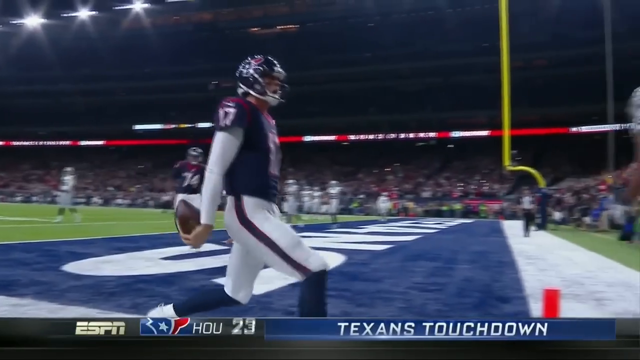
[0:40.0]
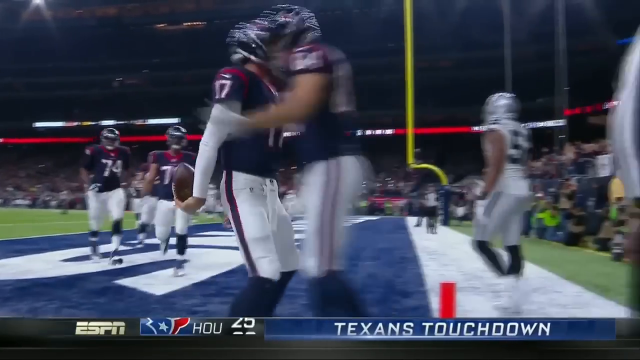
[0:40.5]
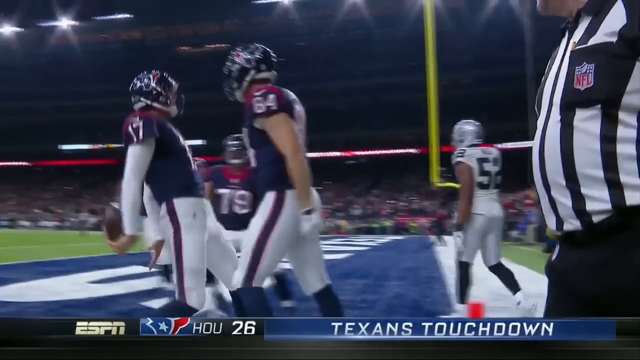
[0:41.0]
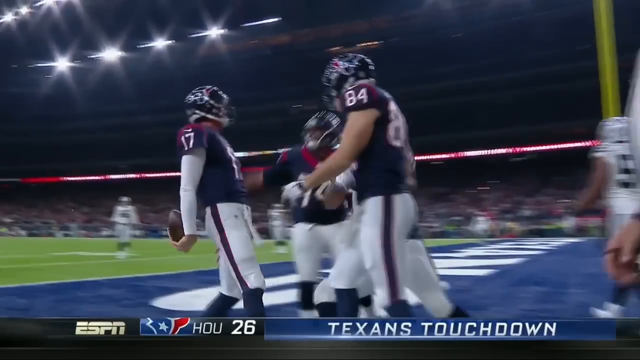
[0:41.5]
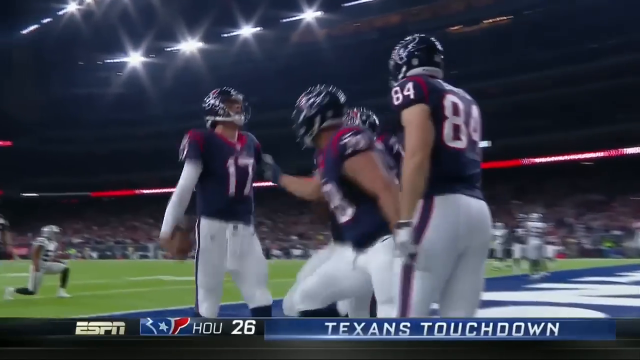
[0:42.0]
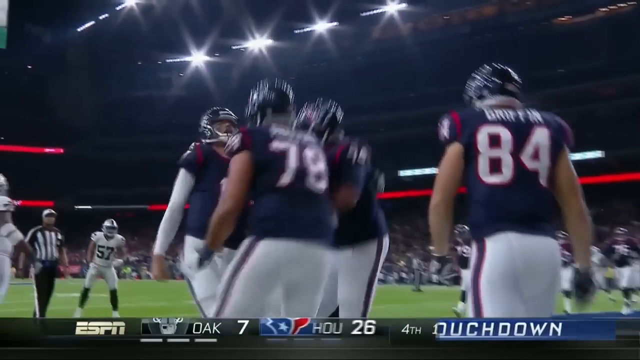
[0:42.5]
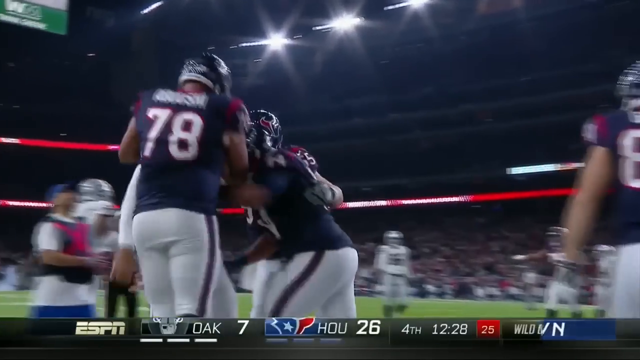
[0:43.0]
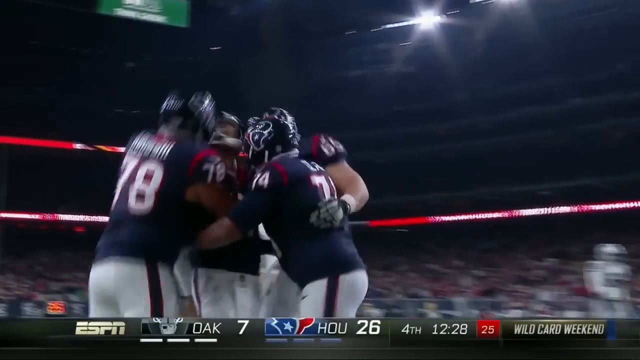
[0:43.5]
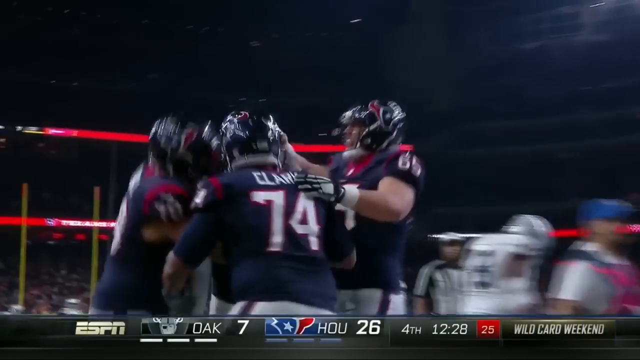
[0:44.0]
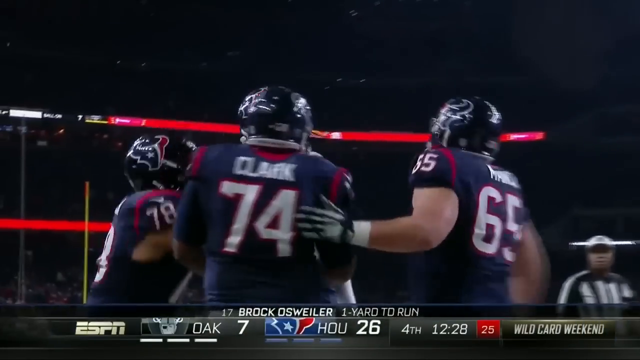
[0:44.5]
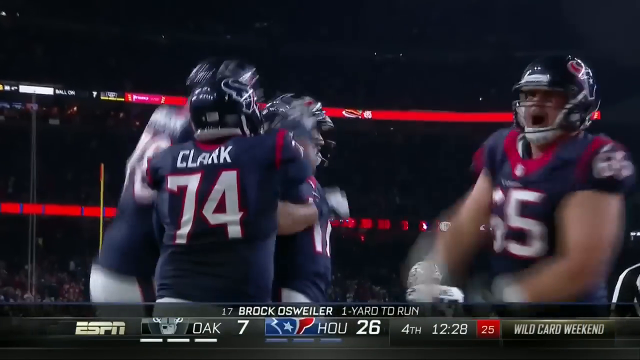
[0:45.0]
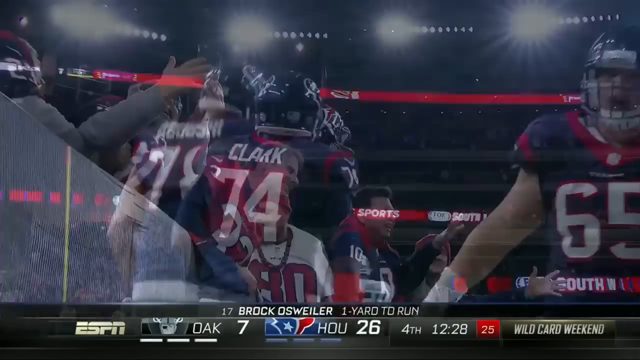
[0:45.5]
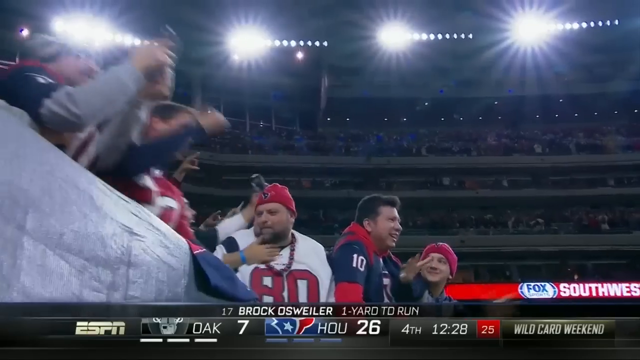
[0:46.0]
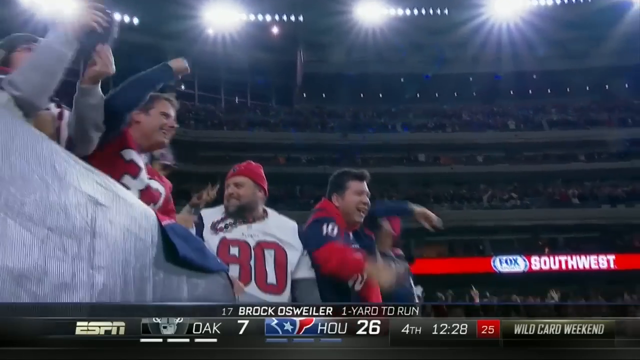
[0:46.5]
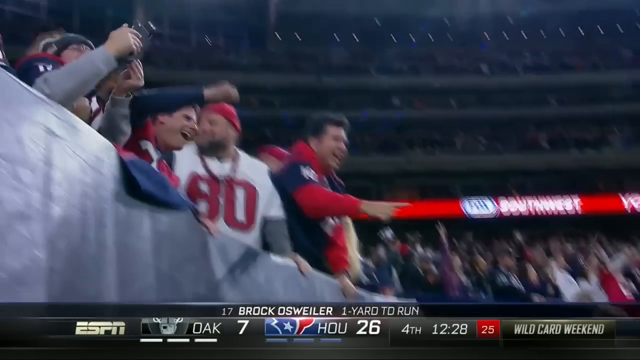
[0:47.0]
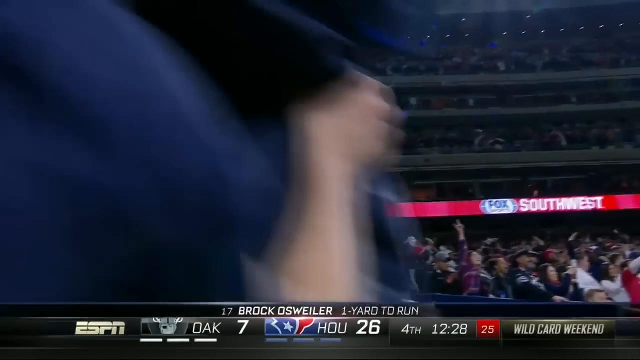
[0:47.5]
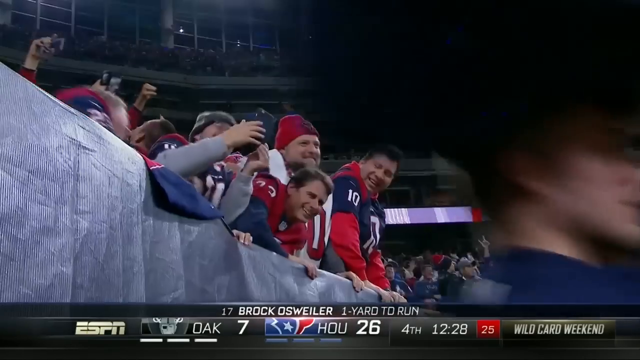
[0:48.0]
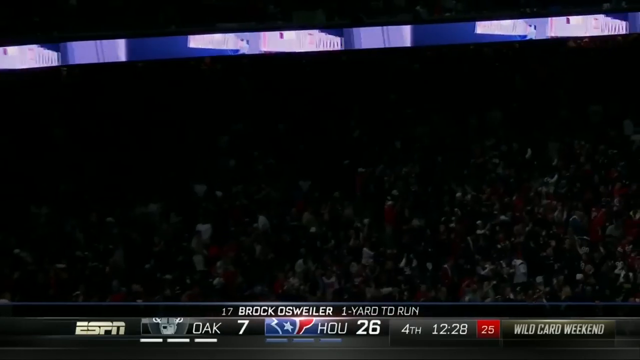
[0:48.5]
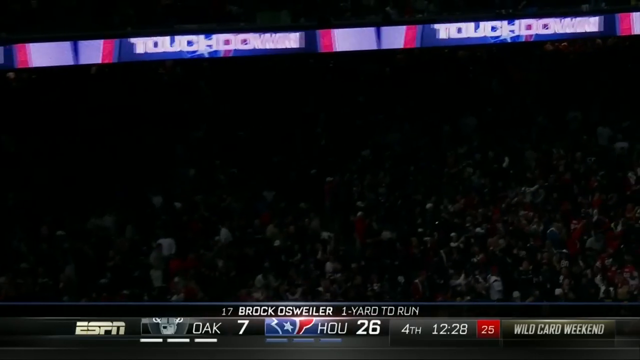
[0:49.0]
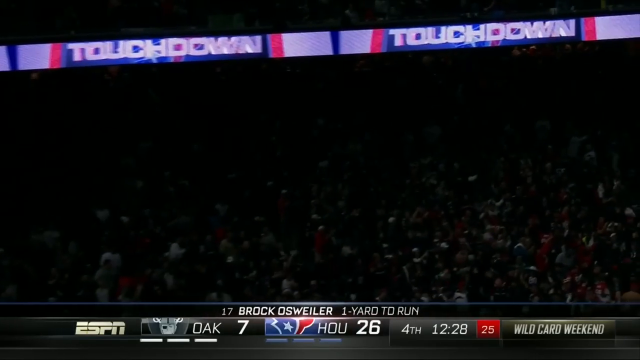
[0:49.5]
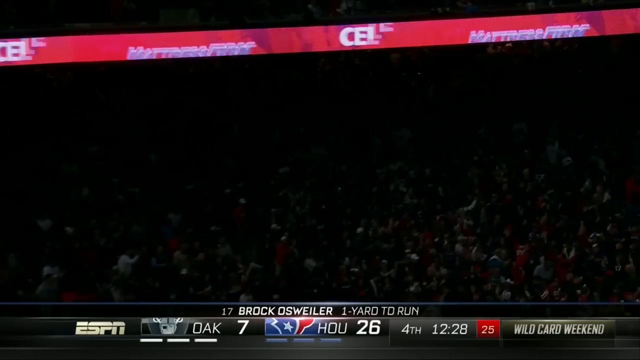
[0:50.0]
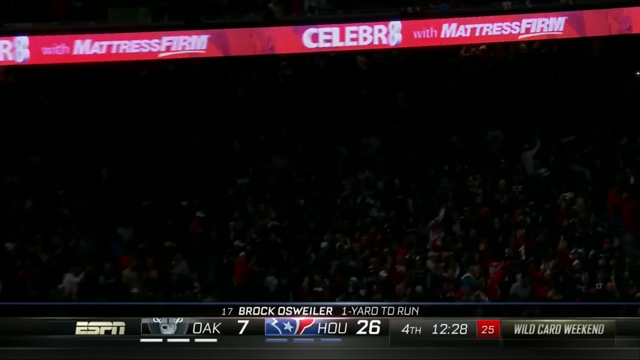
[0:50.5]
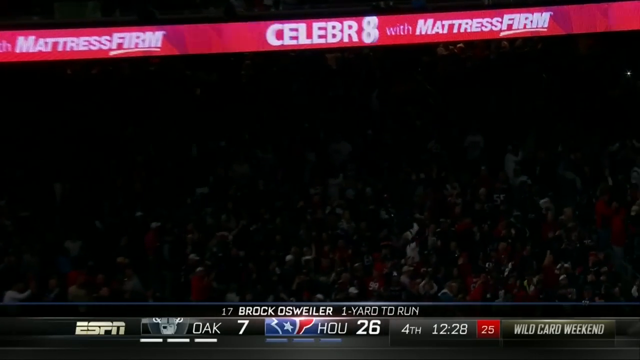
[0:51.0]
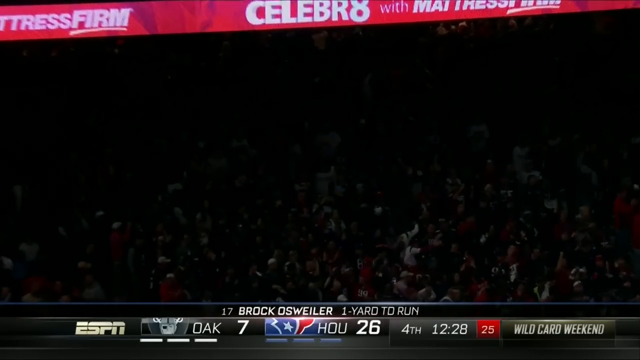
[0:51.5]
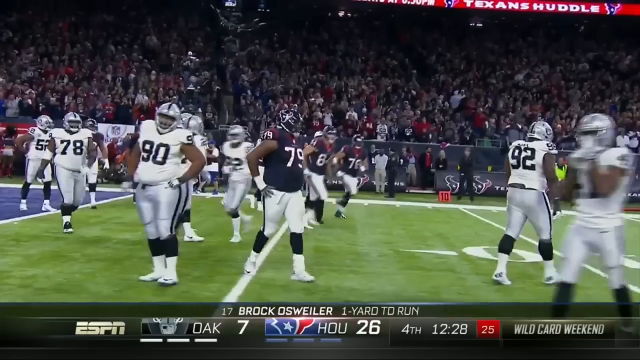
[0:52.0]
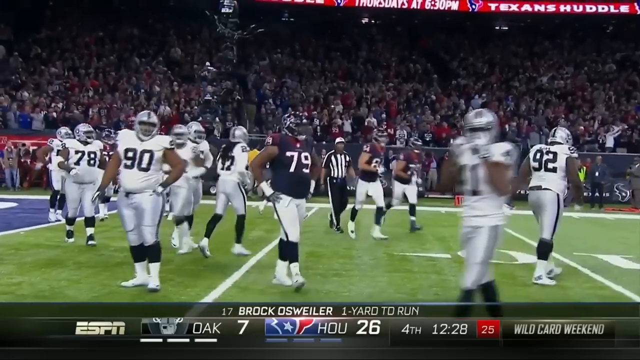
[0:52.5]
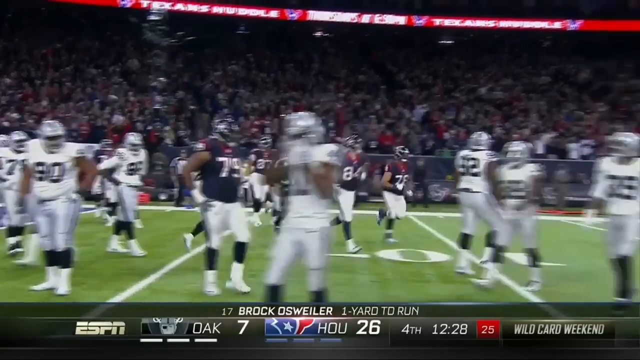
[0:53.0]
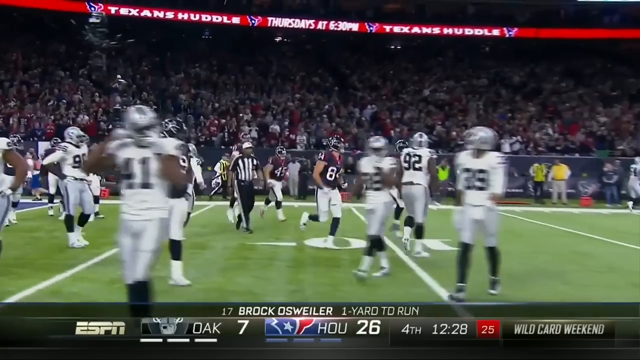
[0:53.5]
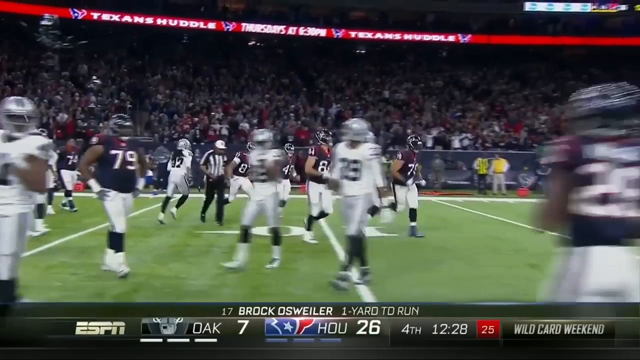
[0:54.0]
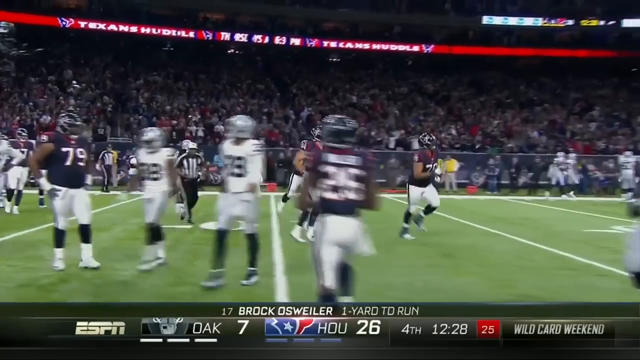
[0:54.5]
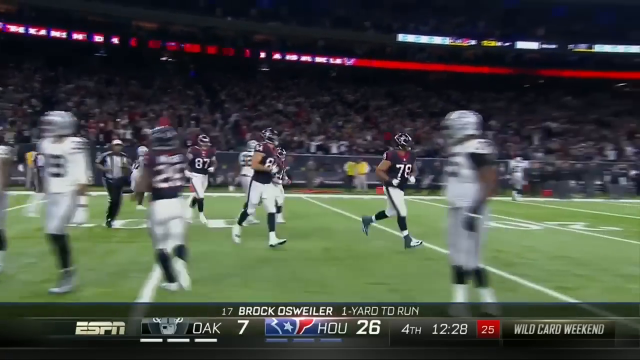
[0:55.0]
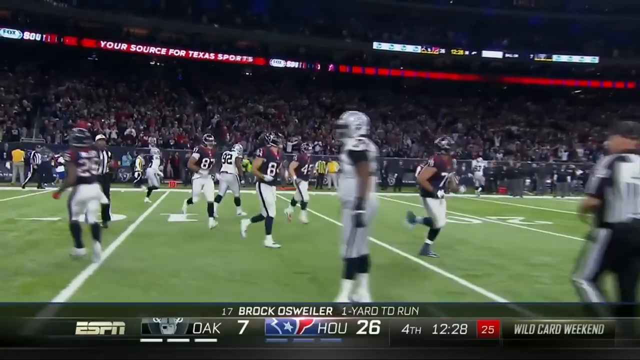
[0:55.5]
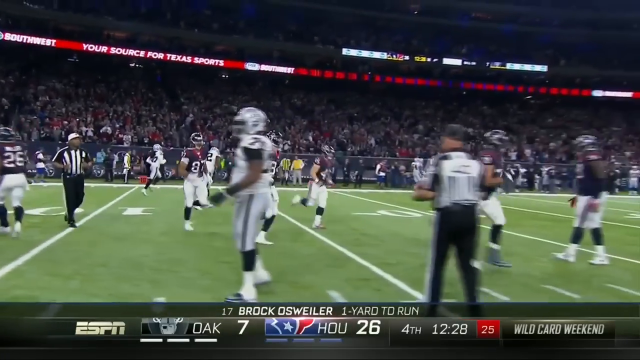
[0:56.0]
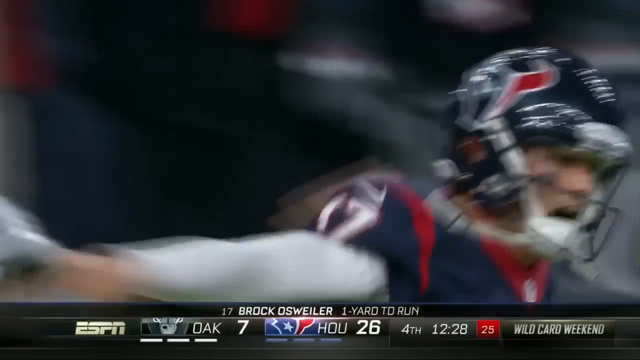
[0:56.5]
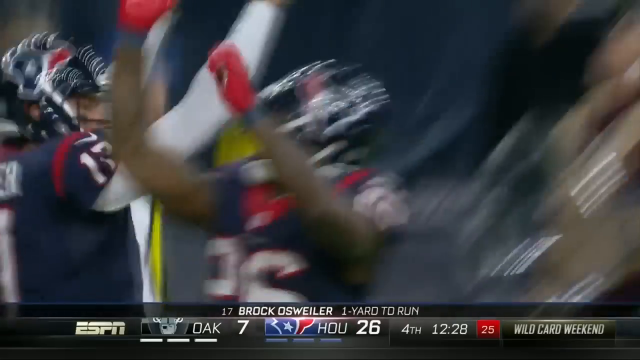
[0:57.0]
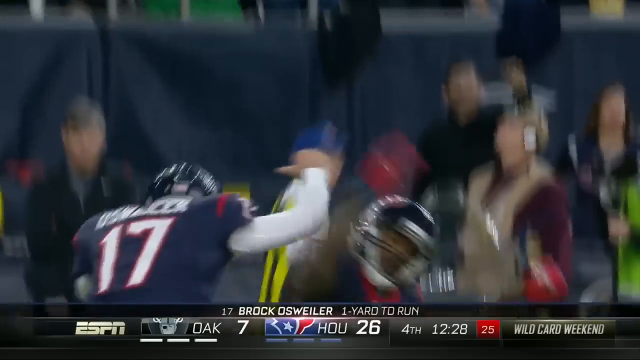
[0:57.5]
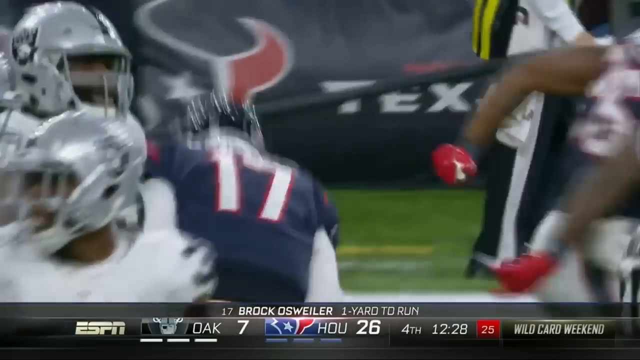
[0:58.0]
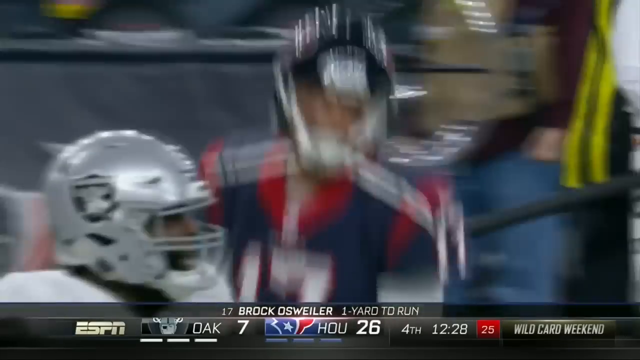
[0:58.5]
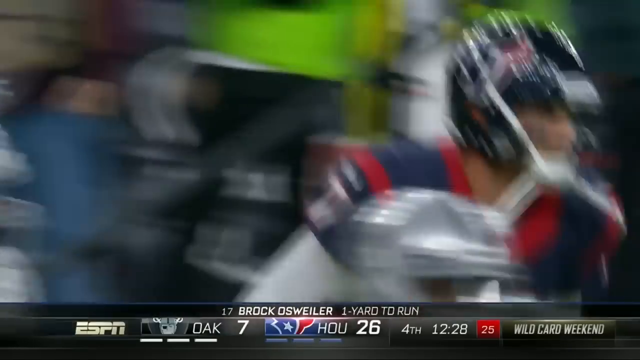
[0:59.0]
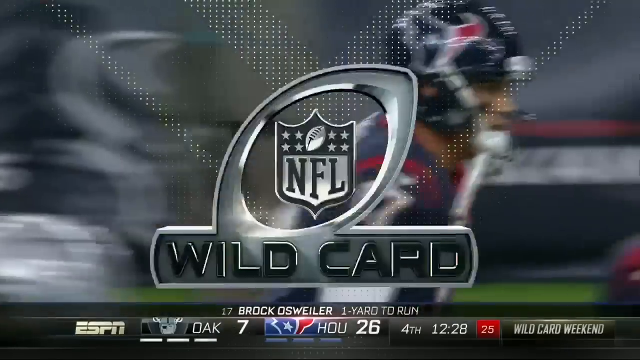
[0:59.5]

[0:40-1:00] Players celebrate, hugging each other and beating each other's chests as if they have won. The purple team celebrates on the ground, running across the pitch and everywhere, while the white team looks like it is finding it difficult, as the purple team appears to have won. A referee wears a black and white striped shirt. Spectators in different clothes watch, one wearing red, and people cheer; the ground is full. The pitch is green marked with white lines and with numbers. Blue and white lights are behind the players, and there are white lights at the top.